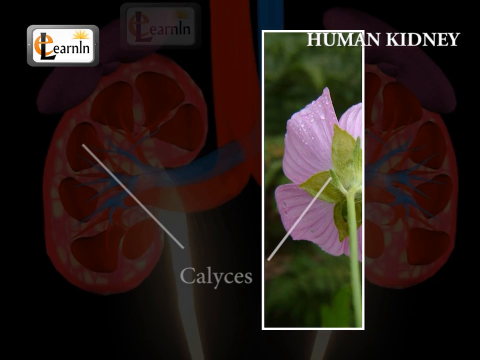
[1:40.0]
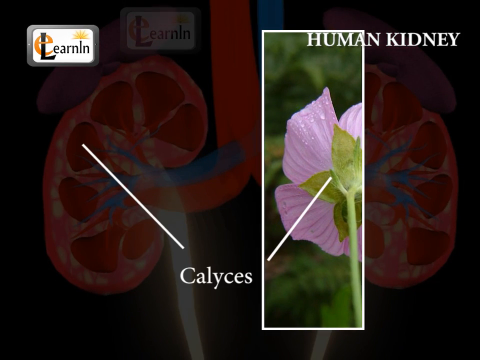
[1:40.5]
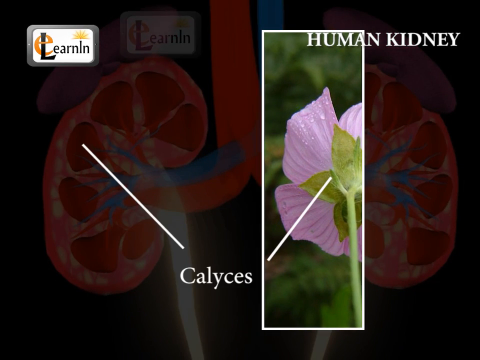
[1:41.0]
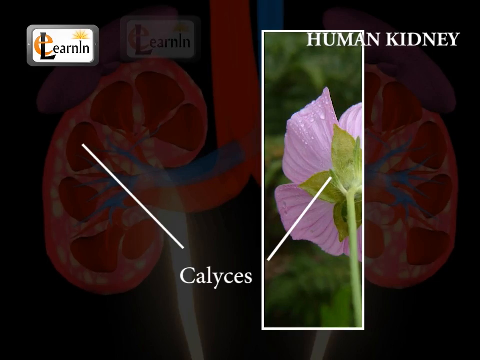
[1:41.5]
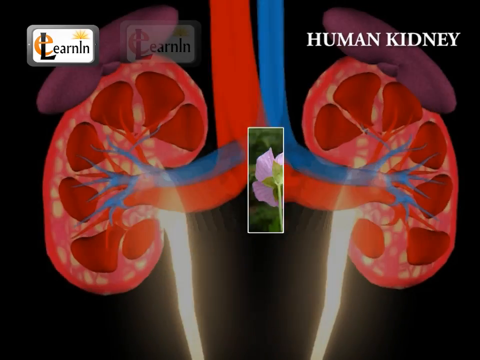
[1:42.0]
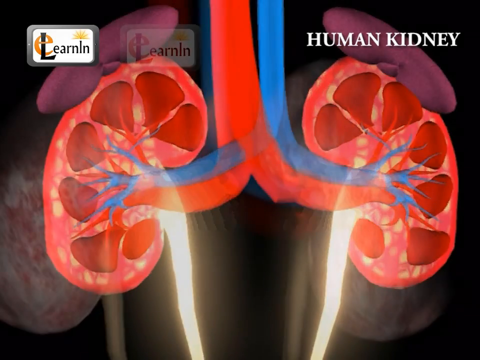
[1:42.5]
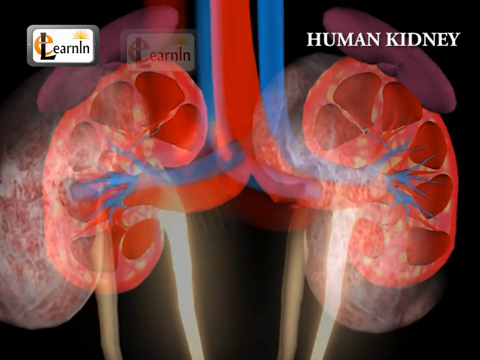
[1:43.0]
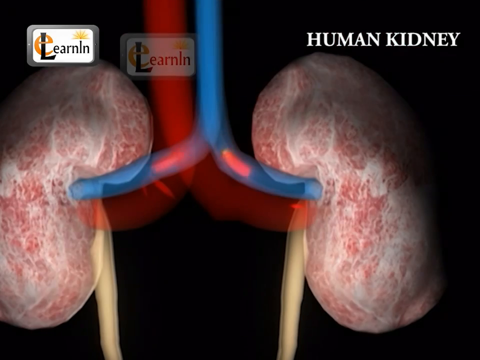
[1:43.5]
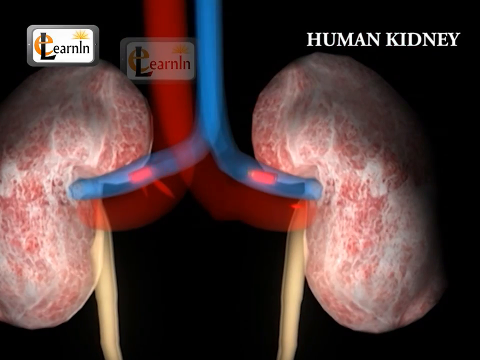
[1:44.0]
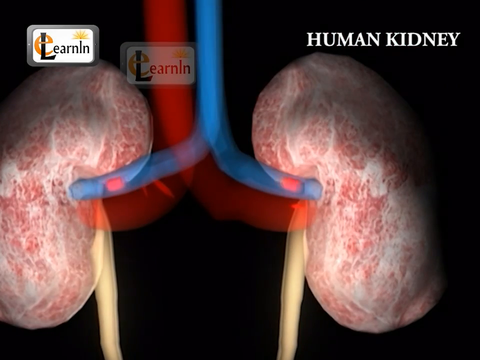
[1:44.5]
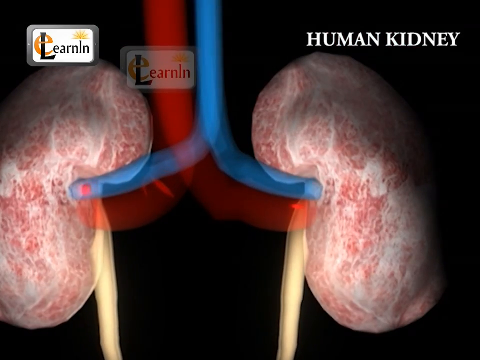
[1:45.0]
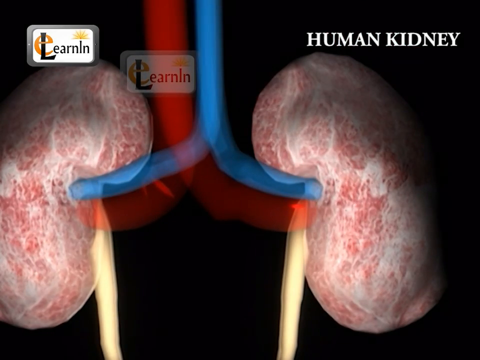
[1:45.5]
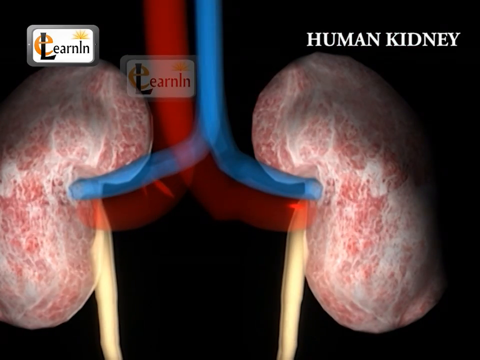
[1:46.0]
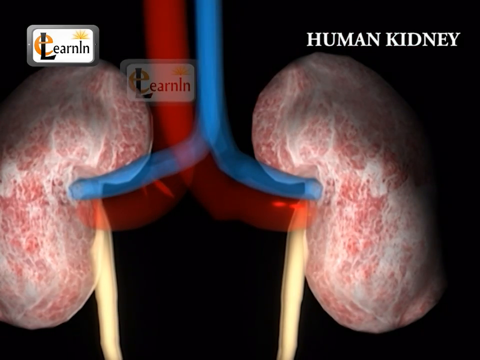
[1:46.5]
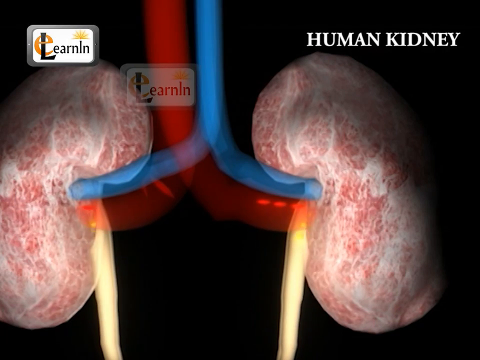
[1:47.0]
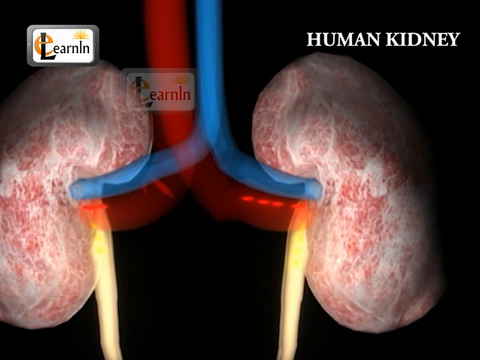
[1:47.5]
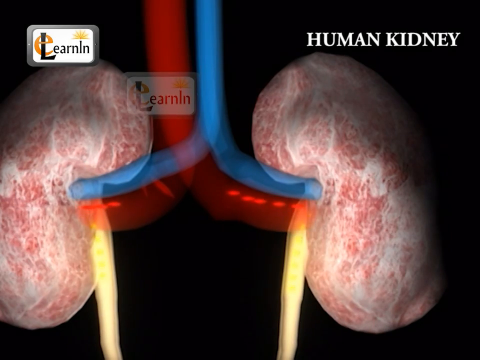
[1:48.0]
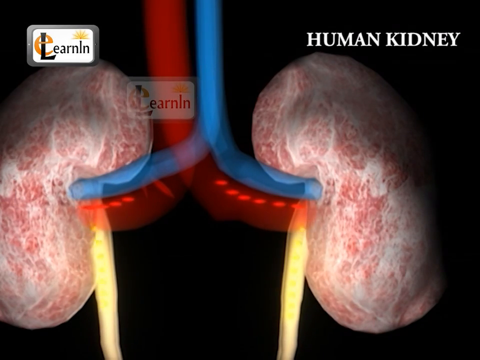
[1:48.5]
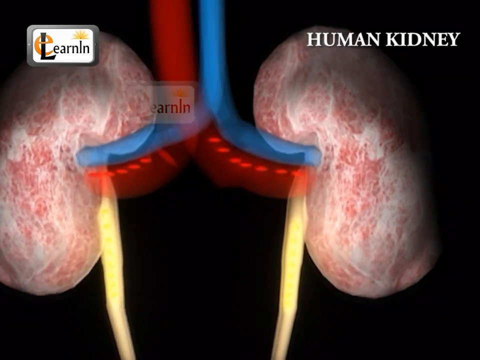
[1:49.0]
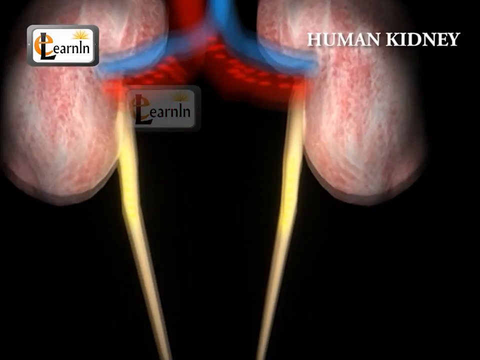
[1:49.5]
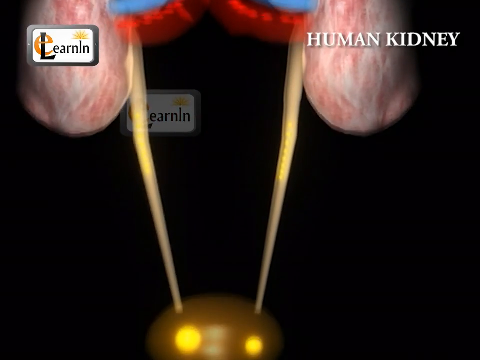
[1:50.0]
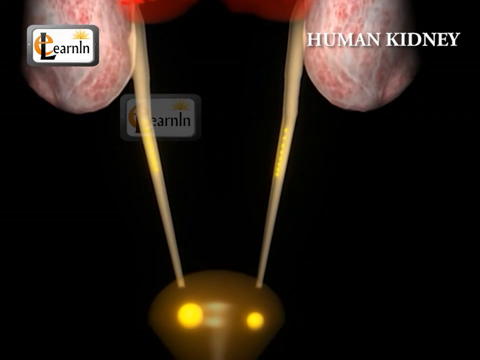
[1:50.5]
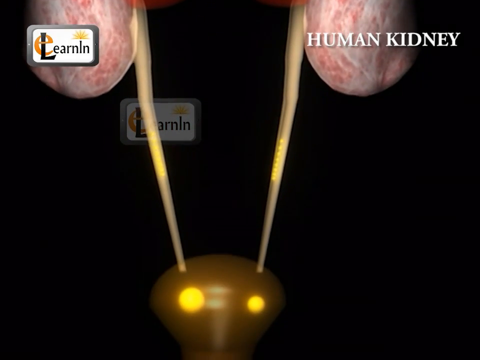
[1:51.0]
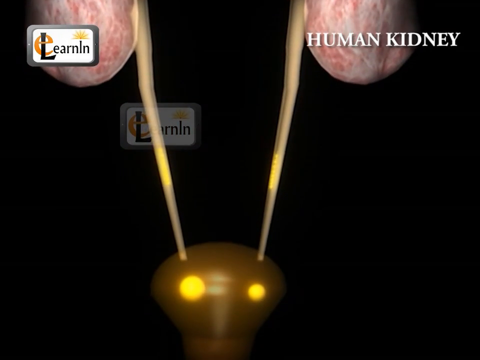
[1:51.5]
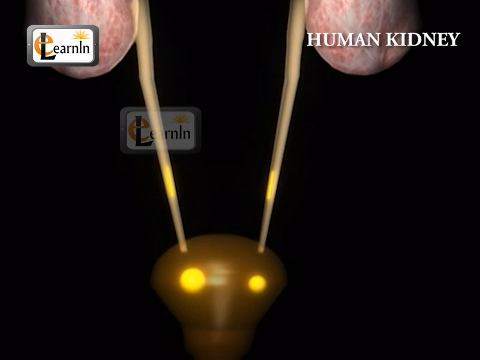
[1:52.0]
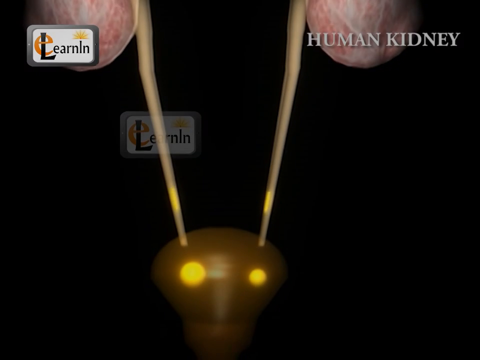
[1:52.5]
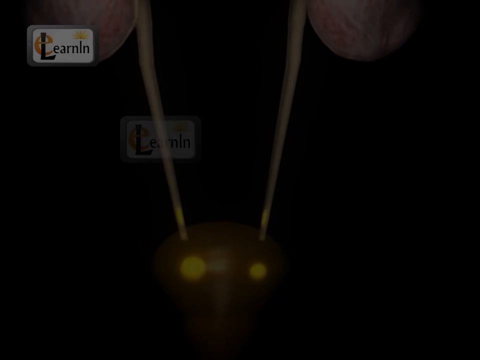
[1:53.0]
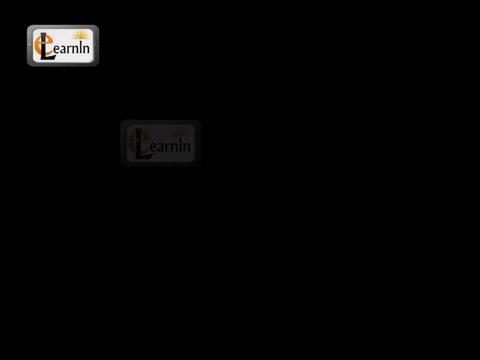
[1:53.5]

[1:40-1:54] An image is enclosed inside an elongated rectangle with rather thin white edges; inside it is a flower with pink petals and a green stem. A few moments in, the rectangle shrinks very quickly and, in its last moments before disappearing, the small rectangle is positioned exactly in the center of the frame. Other three-dimensional illustrations follow, showing red particles moving inside what seem to be channels that are also red. After the camera moves down, yellow particles of the corpuscles are seen moving toward the lower part of the frame.